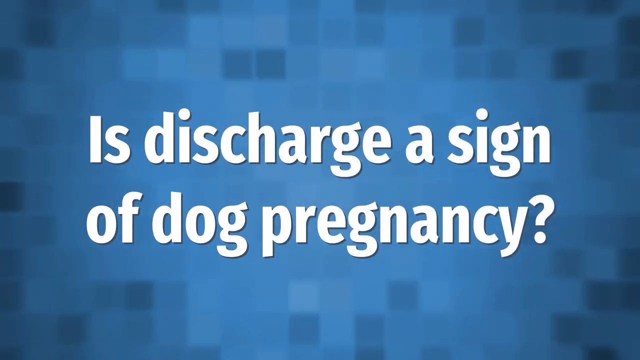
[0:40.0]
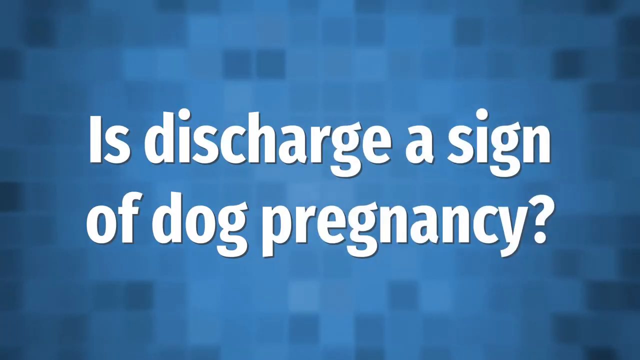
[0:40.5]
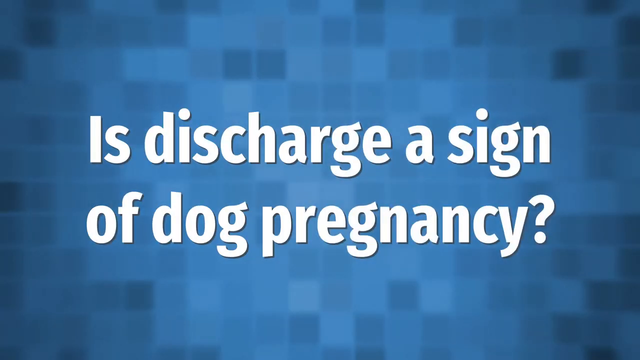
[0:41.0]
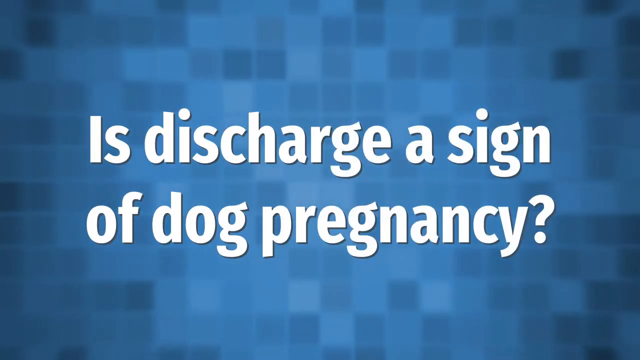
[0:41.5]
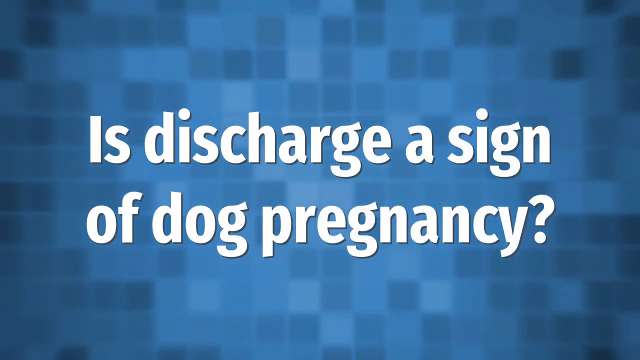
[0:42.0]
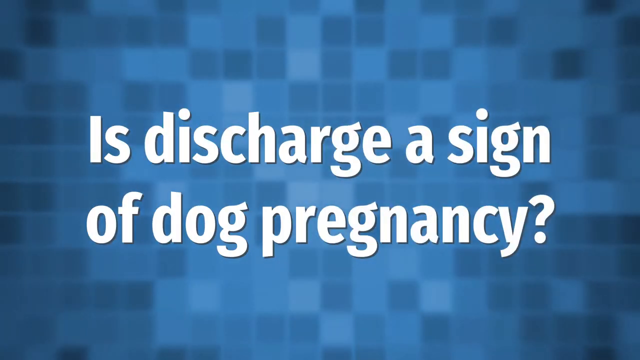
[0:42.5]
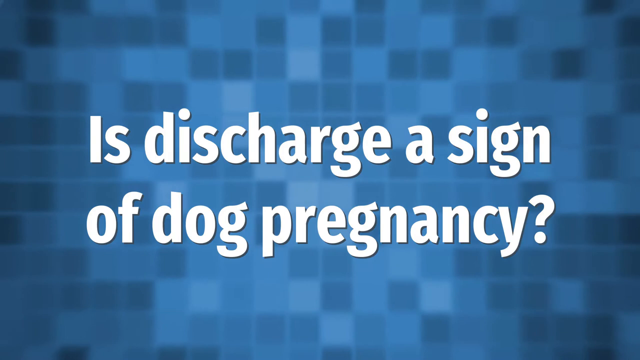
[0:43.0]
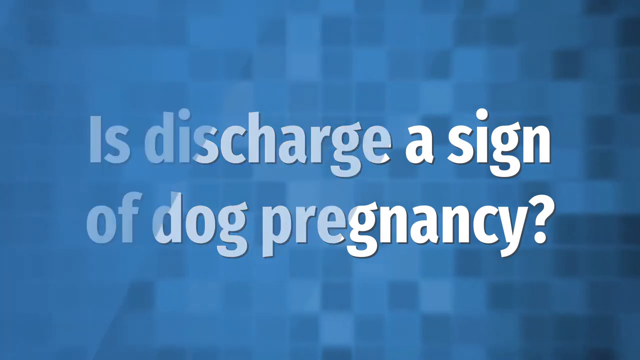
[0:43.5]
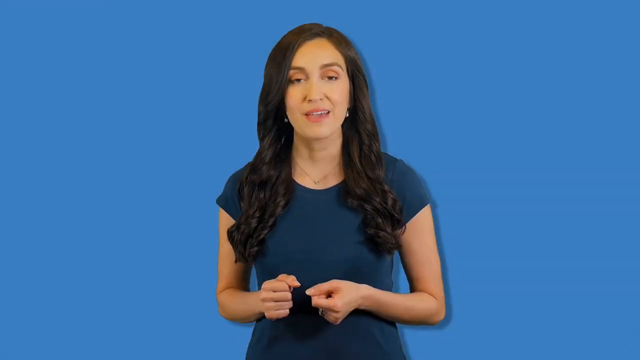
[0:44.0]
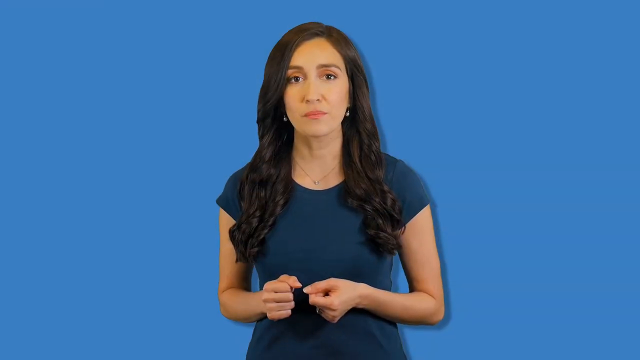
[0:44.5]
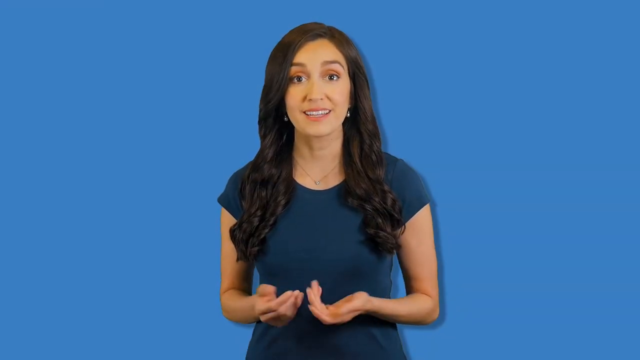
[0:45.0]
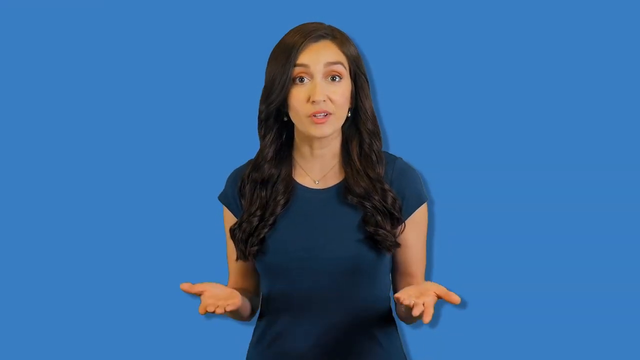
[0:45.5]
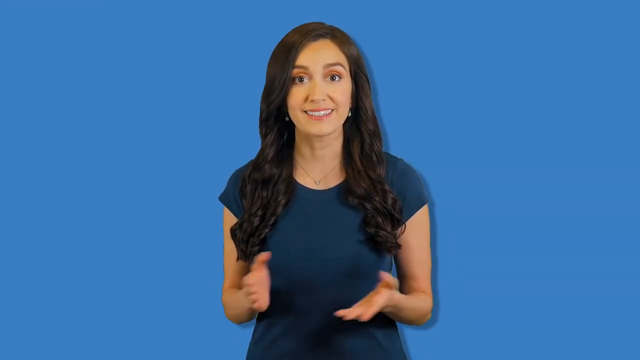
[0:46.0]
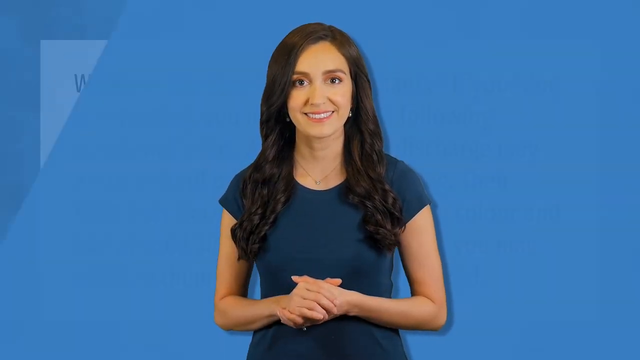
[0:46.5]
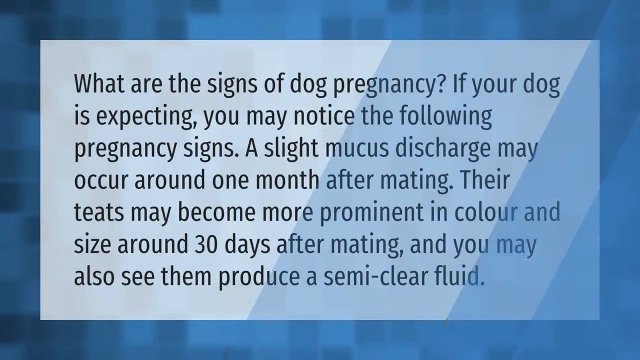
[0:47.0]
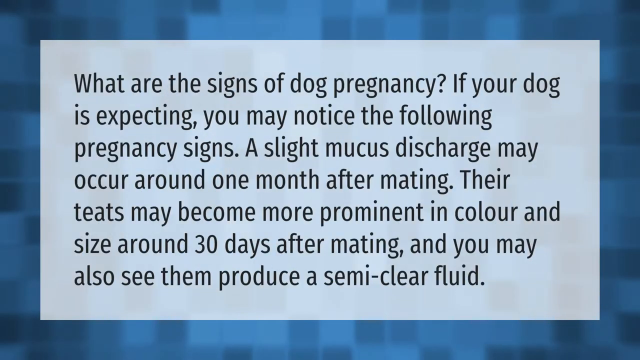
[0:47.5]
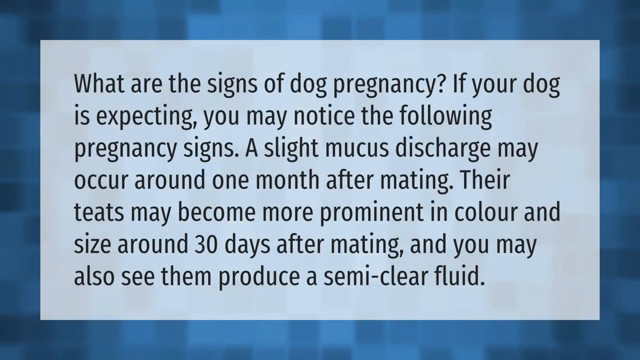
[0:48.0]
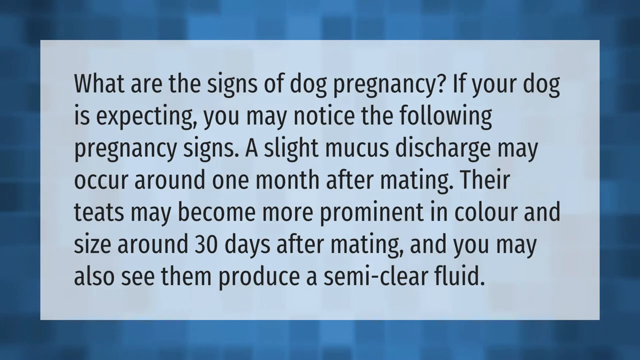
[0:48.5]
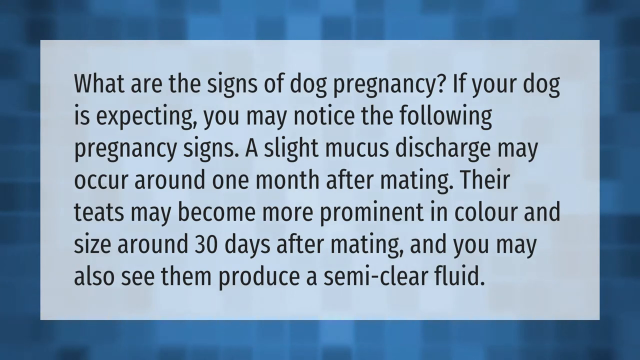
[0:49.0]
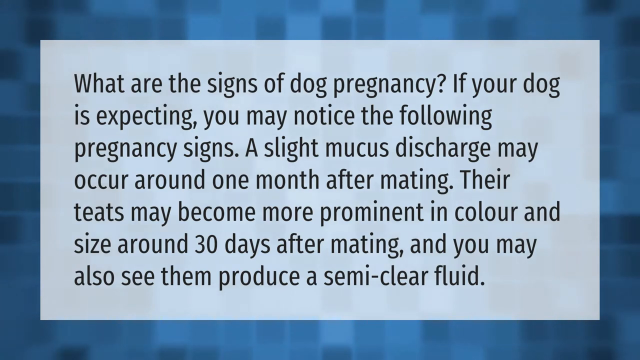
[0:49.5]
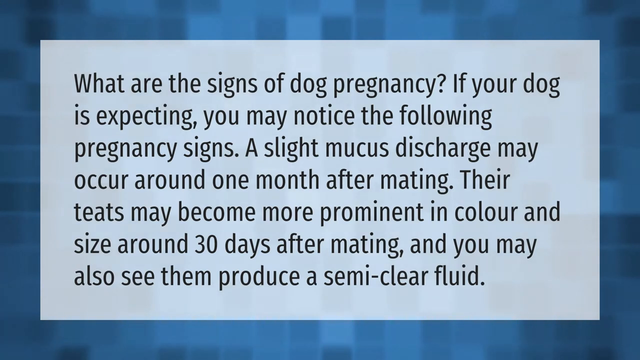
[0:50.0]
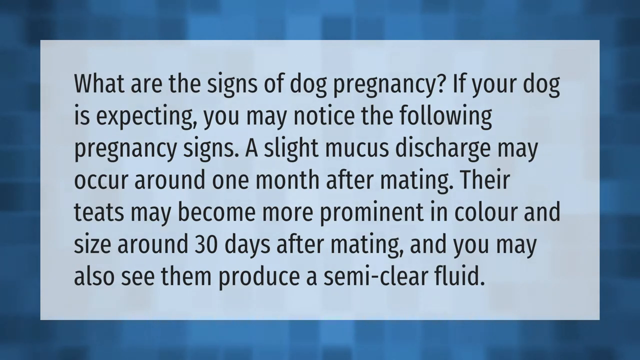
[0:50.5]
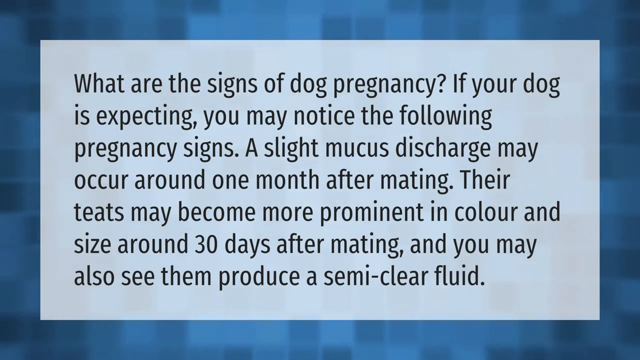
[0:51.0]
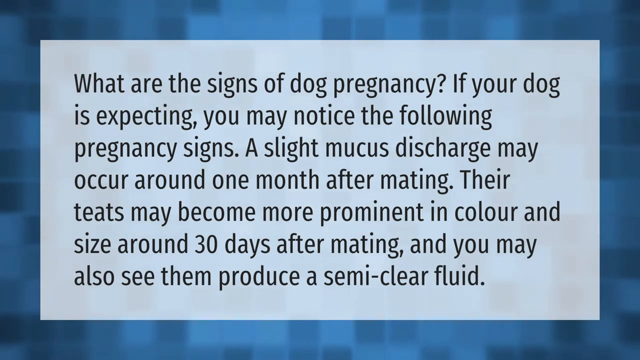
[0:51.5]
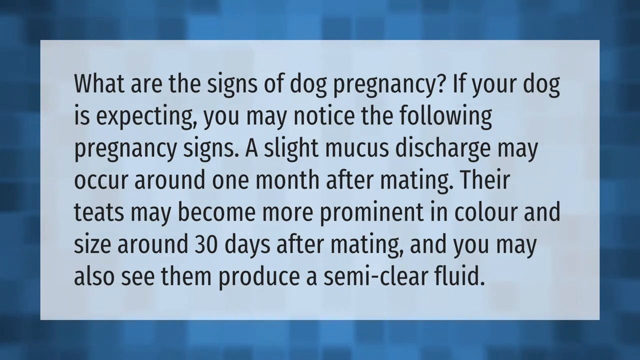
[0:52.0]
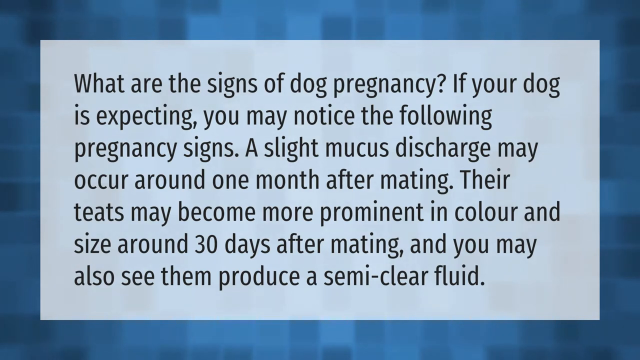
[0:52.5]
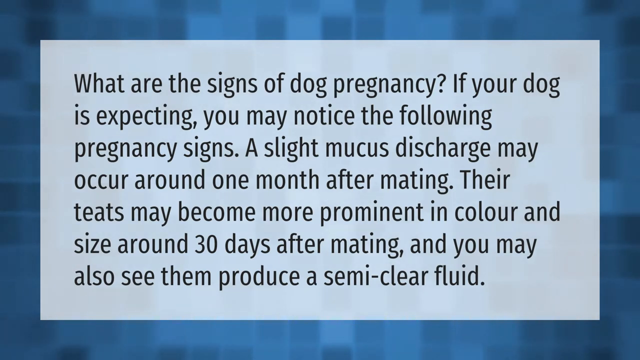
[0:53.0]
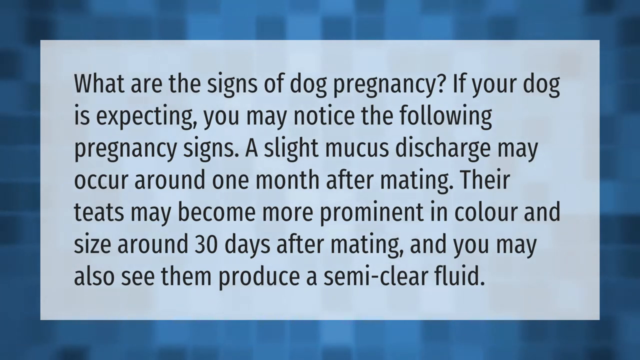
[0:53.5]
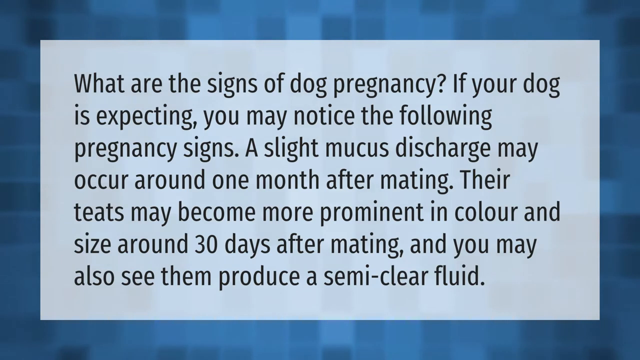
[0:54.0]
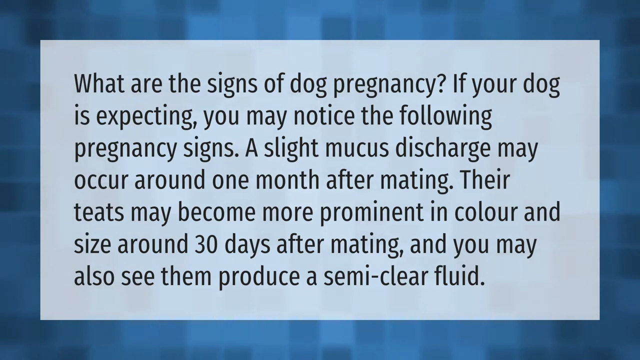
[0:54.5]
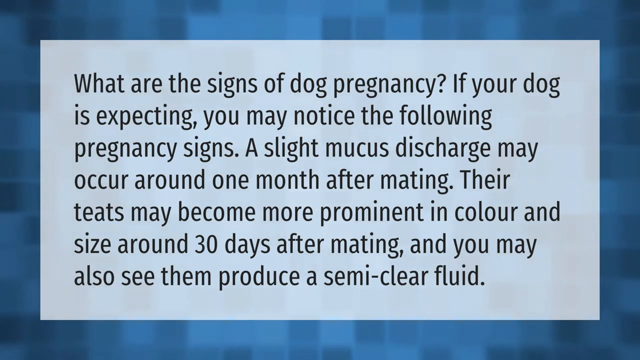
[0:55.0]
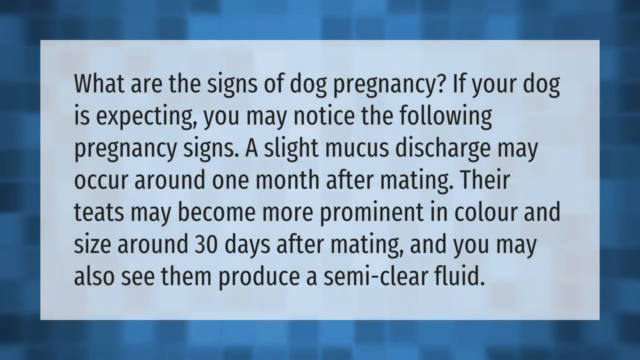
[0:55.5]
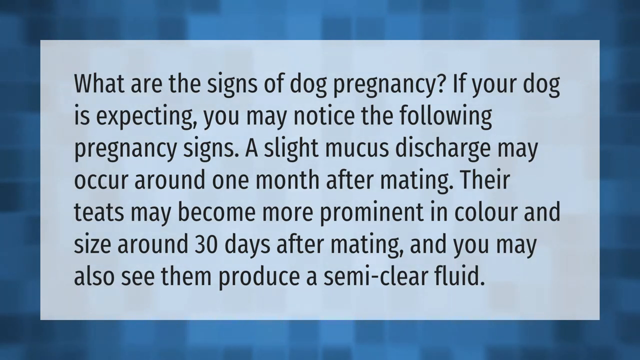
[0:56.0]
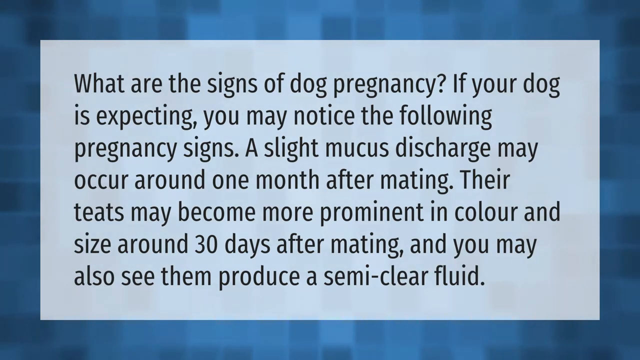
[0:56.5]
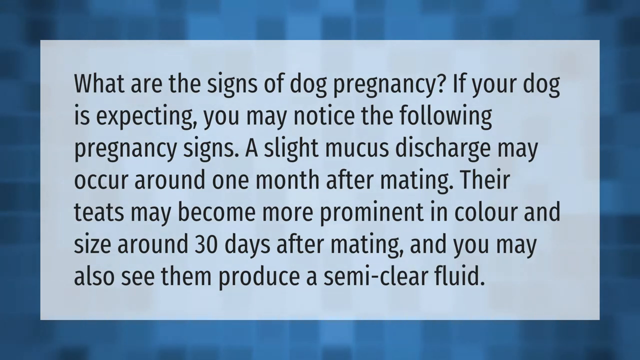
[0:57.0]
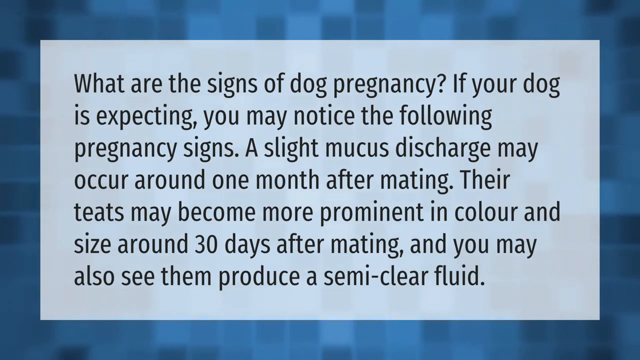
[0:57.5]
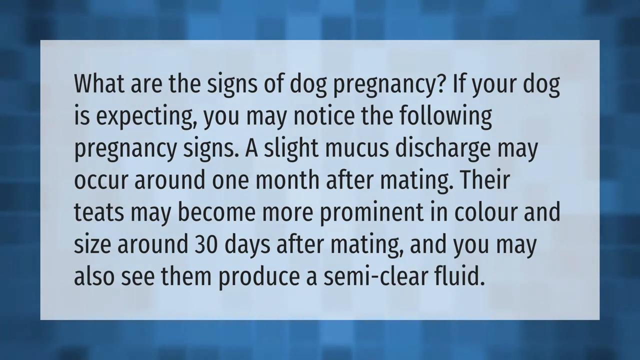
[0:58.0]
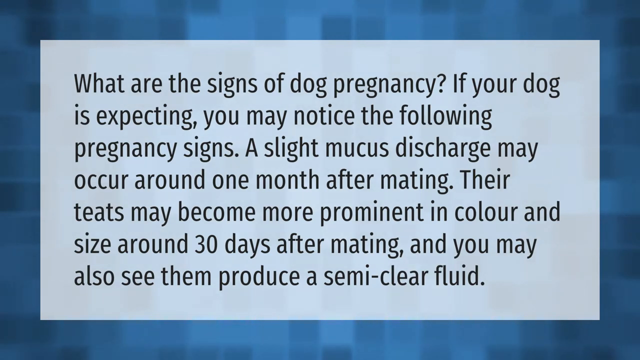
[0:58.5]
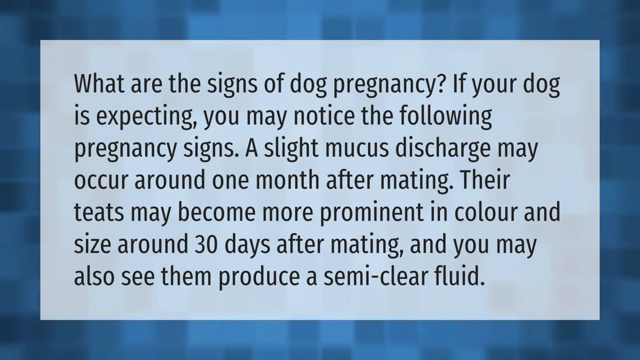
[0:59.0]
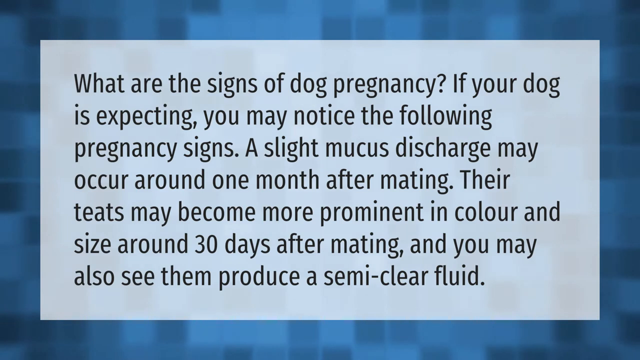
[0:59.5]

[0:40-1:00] A blue screen with darker squares reads "is discharge a sign of dog pregnancy." It changes to a solid blue screen where the woman with dark hair in the dark blue shirt is shown talking. Next comes the dark blue screen with squares in the background and a lighter blue square on top, reading "what are the signs of dog pregnancy if your dog is expecting you may notice the following pregnancy signs a slight mucus discharge may occur around one month after mating their teats may become more prominent in color and size and around after 30 days after mating and you may also see them produce a semi-clear fluid."